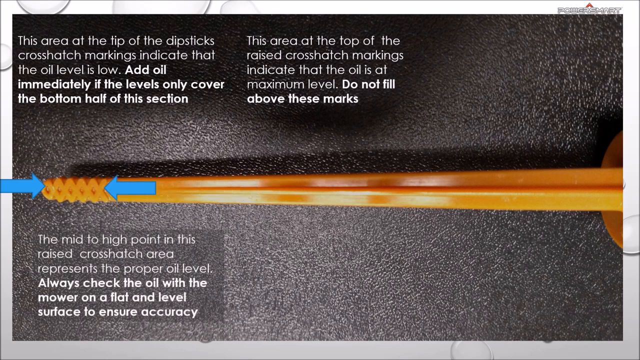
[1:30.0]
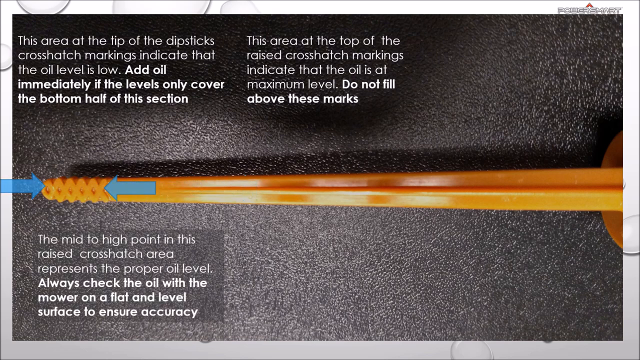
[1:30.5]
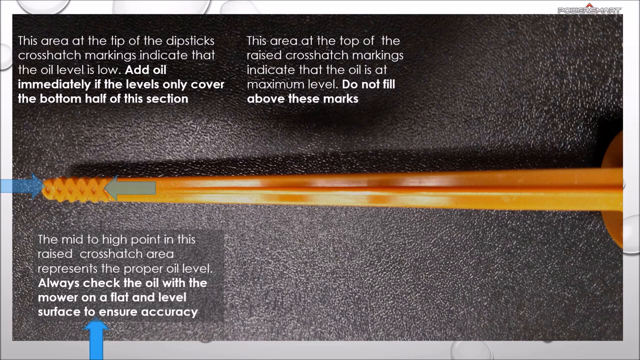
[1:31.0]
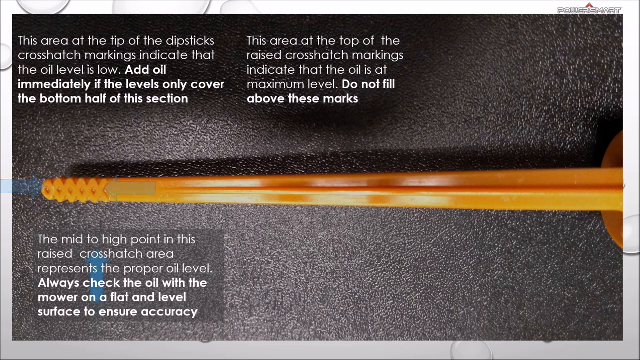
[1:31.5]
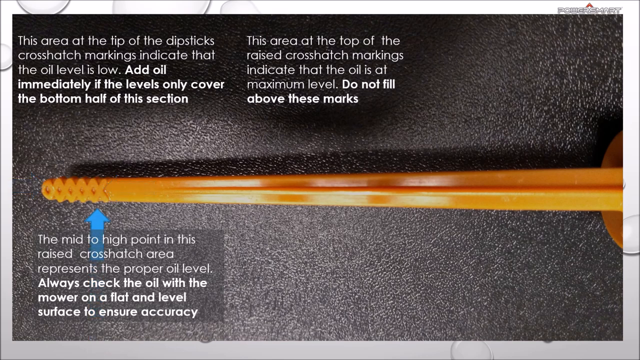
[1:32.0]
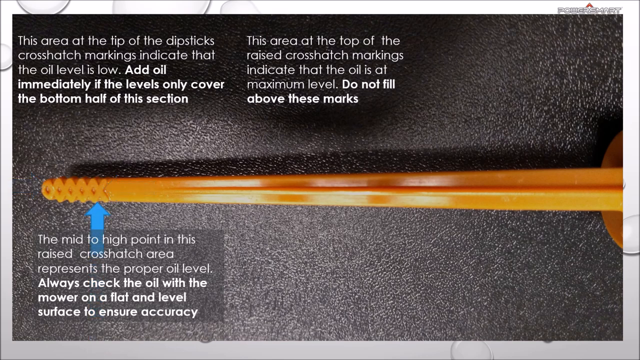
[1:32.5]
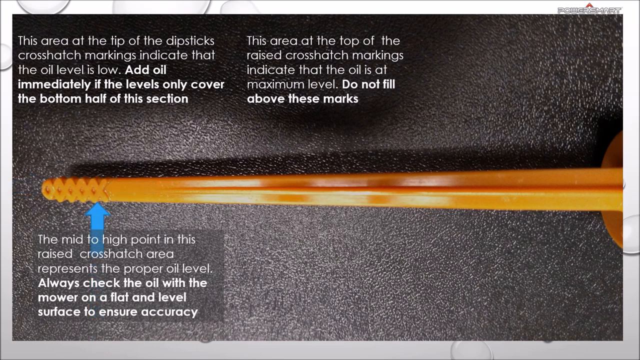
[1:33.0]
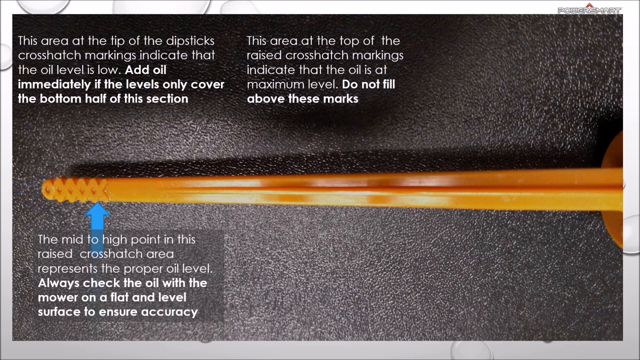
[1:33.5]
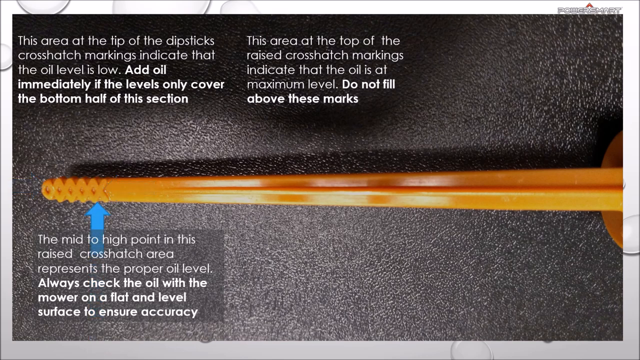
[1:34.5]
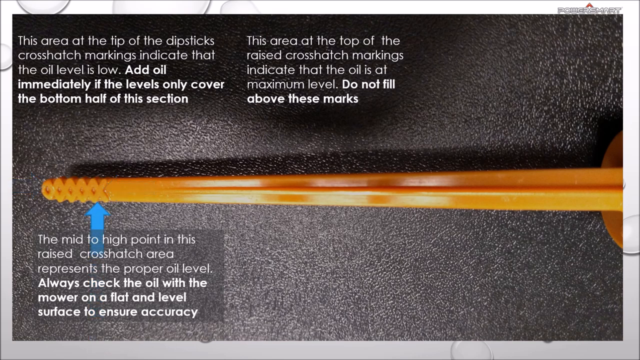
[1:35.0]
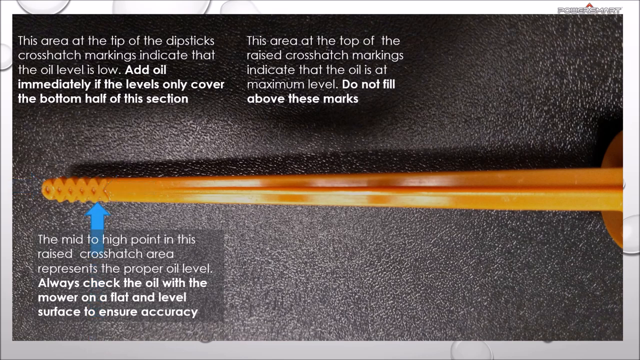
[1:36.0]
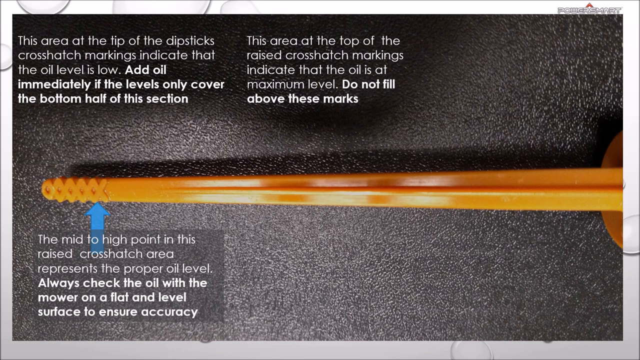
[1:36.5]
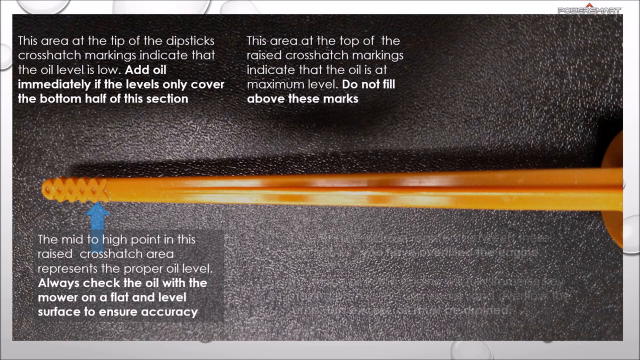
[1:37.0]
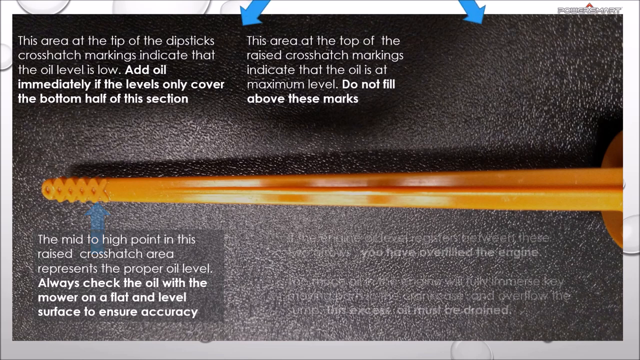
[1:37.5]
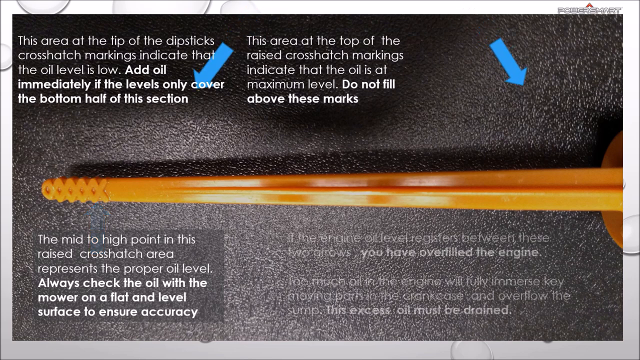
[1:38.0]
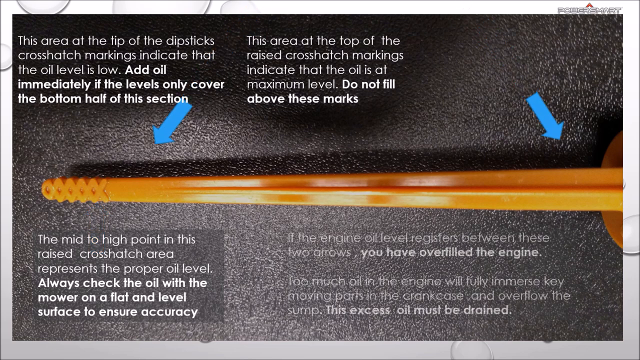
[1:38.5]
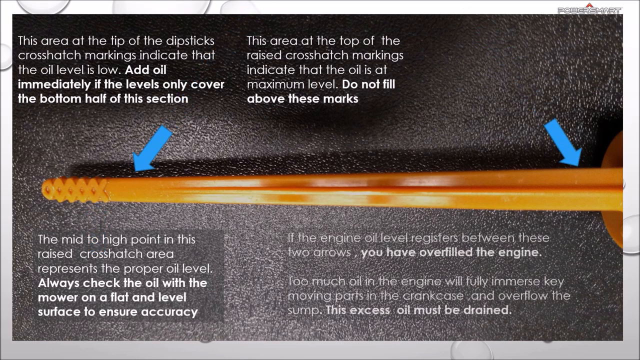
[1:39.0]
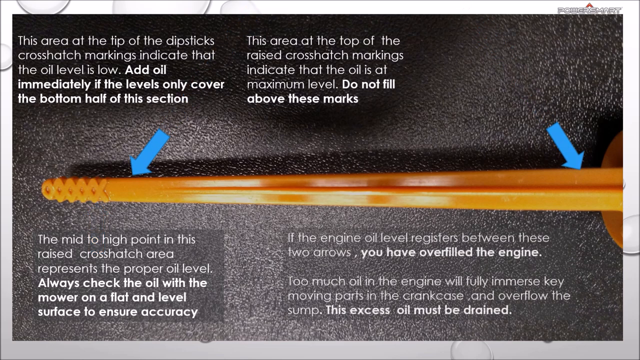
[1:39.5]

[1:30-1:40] The orange dipstick is on a rough black surface, with three instructions on the screen describing how to use the dipstick. Two blue arrows are at the left end and the right side of the dipstick. The blue arrows fade away, and one blue arrow comes in from the bottom left of the screen, pointing at the dipstick. Two more blue arrows come from the top and go down in a diagonal formation on the left side and the right side of the dipstick. Words then appear at the bottom right of the video: "if the engine oil level registers between these two arrows you have overfilled the engine. Too much oil in the engine will fully immerse key moving parts in the crankcase and overflow the sump. This excess oil must be drained."